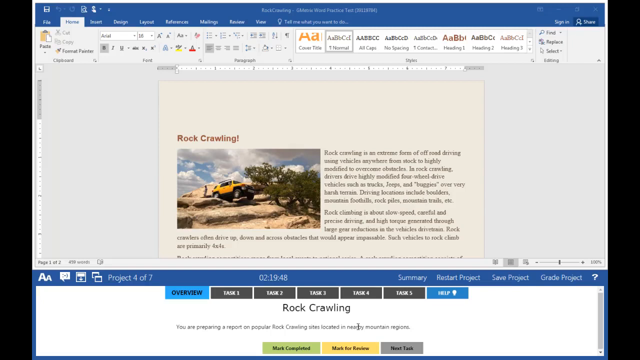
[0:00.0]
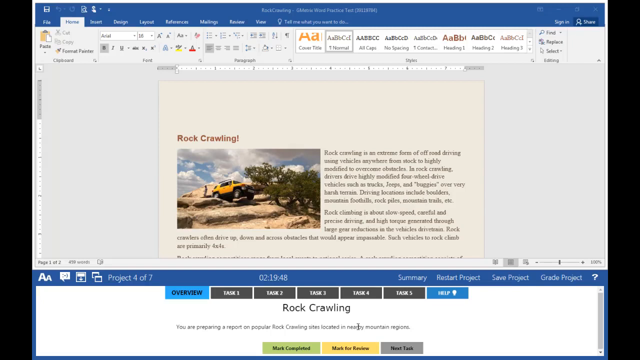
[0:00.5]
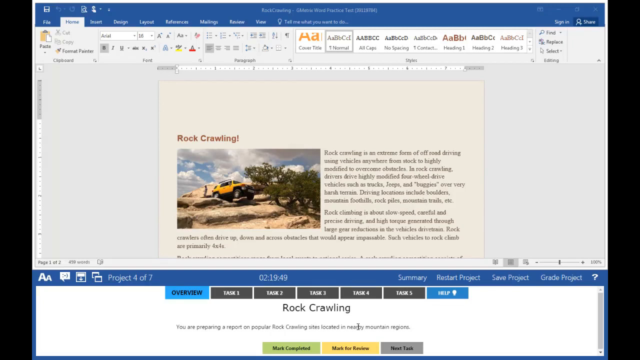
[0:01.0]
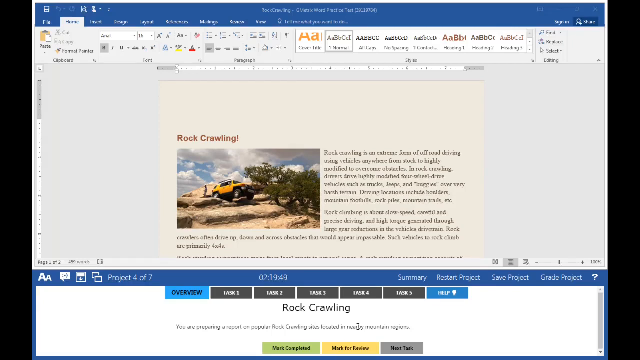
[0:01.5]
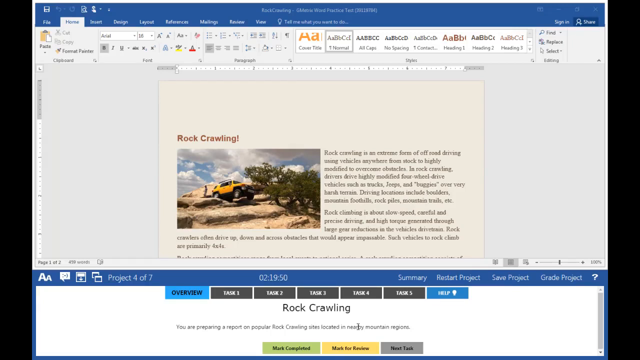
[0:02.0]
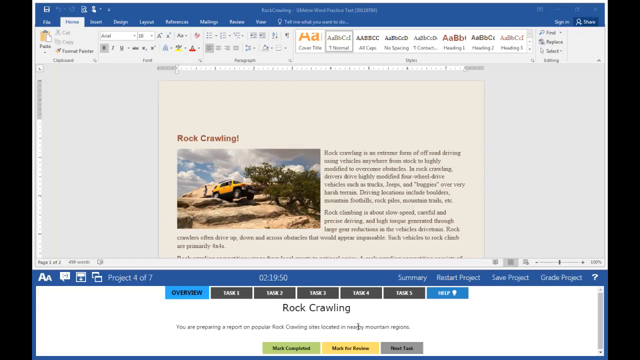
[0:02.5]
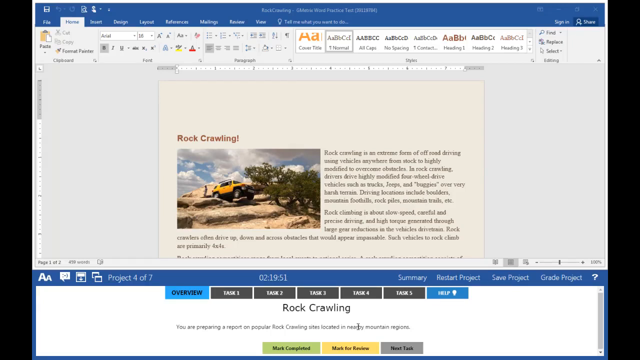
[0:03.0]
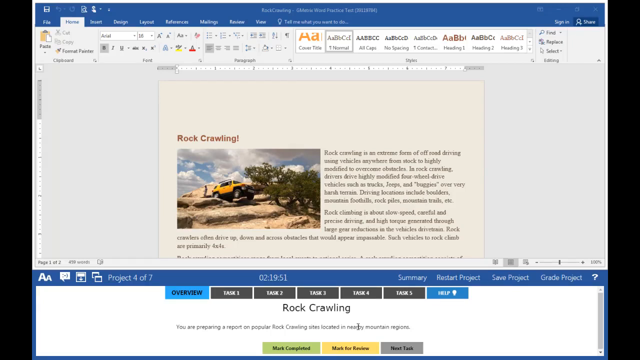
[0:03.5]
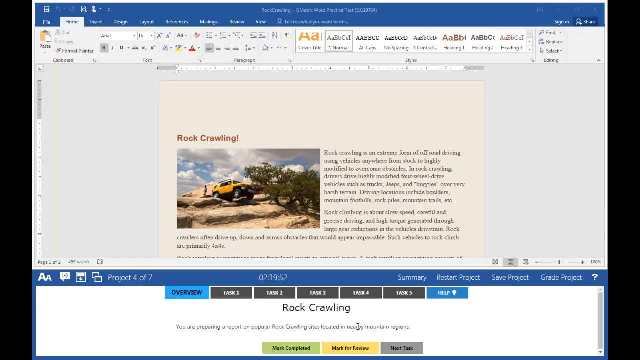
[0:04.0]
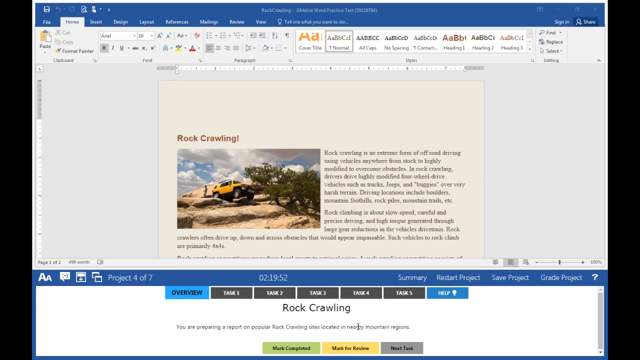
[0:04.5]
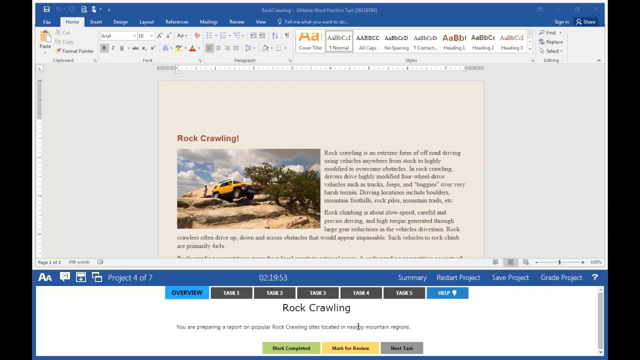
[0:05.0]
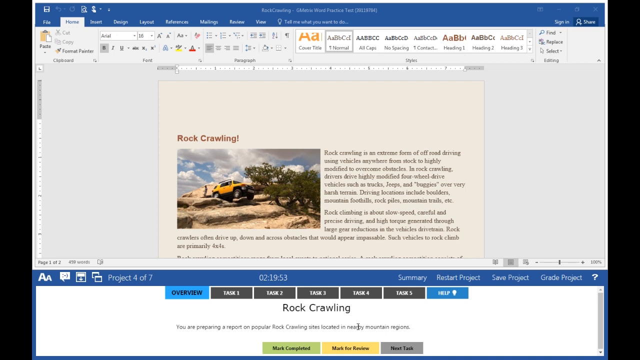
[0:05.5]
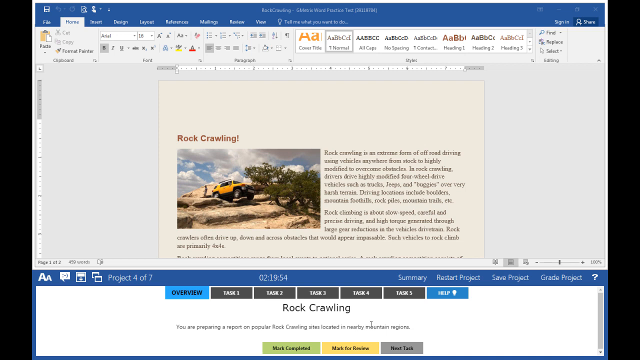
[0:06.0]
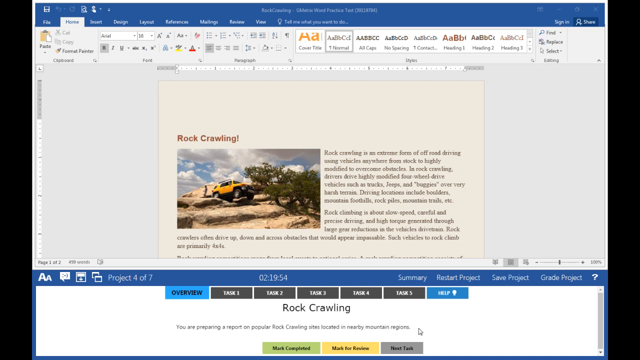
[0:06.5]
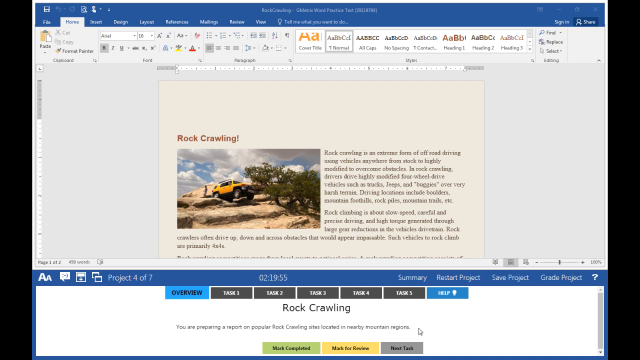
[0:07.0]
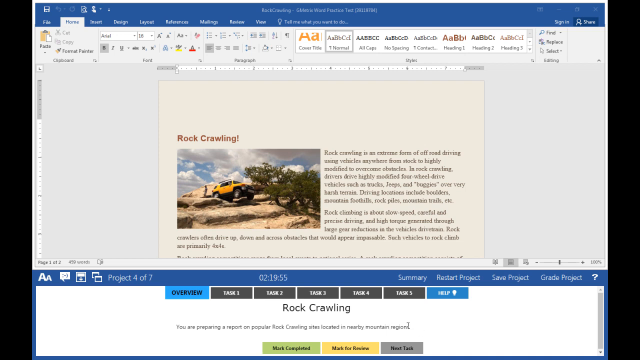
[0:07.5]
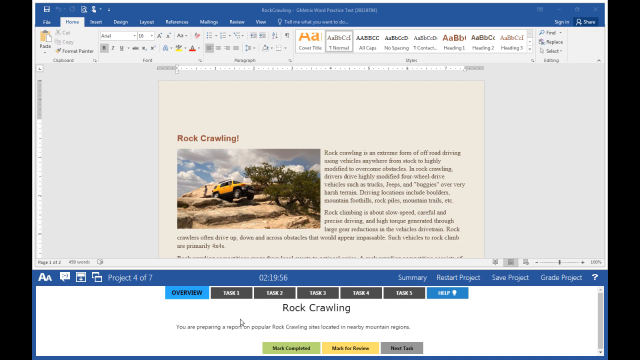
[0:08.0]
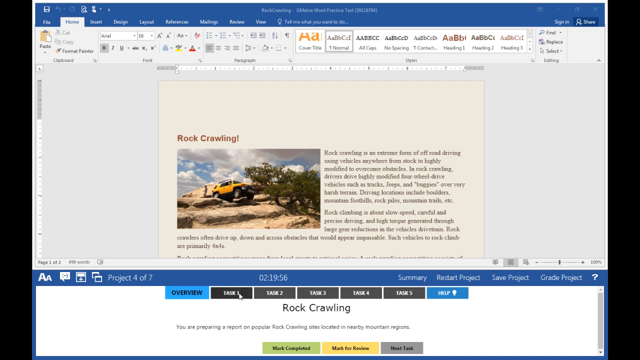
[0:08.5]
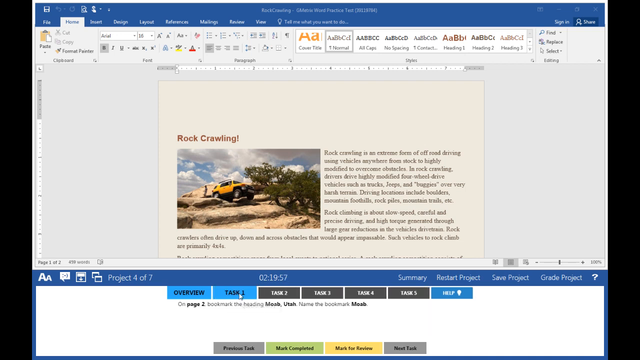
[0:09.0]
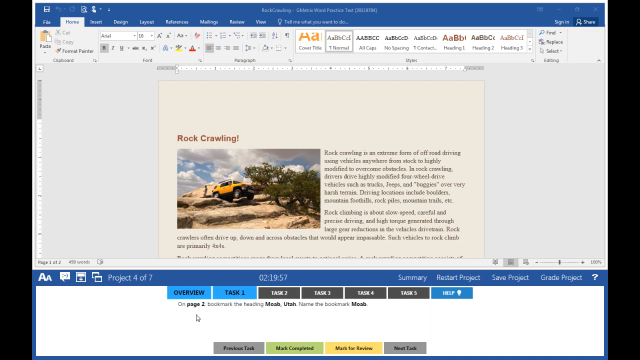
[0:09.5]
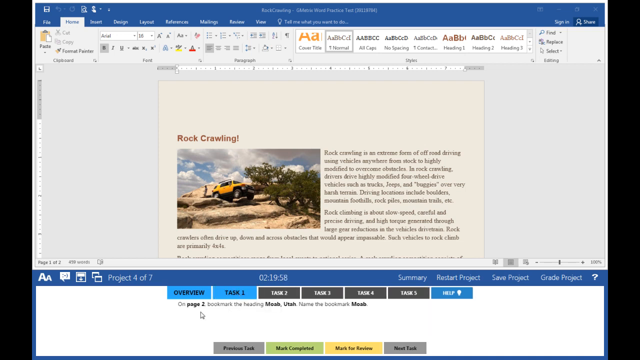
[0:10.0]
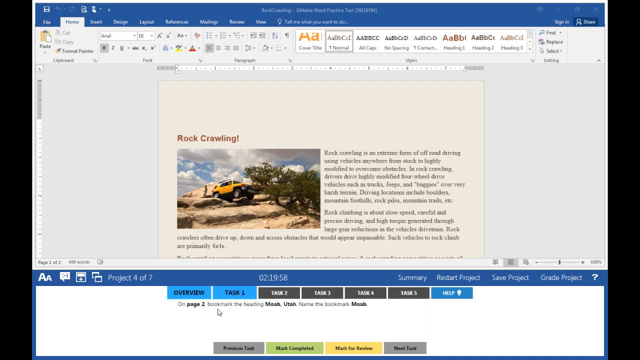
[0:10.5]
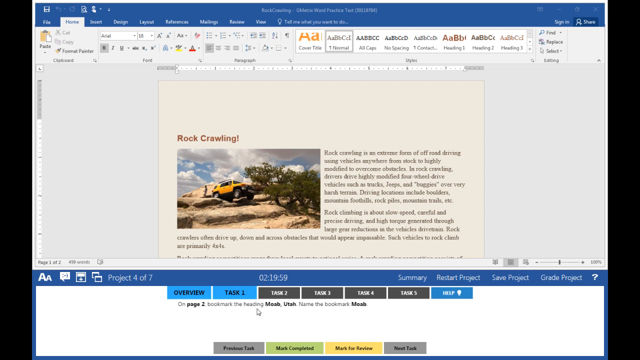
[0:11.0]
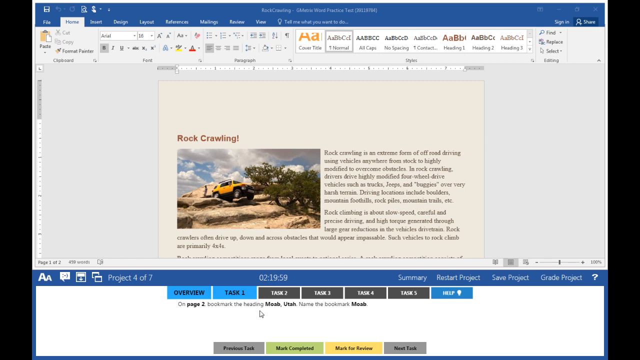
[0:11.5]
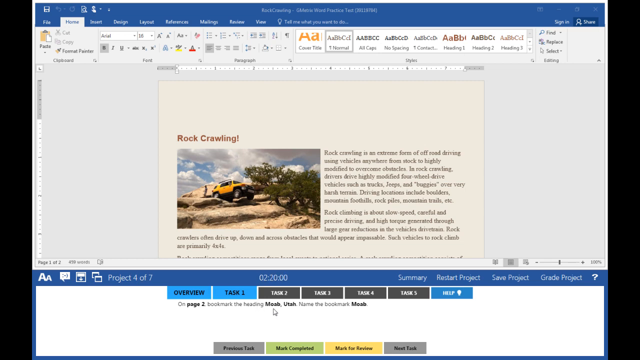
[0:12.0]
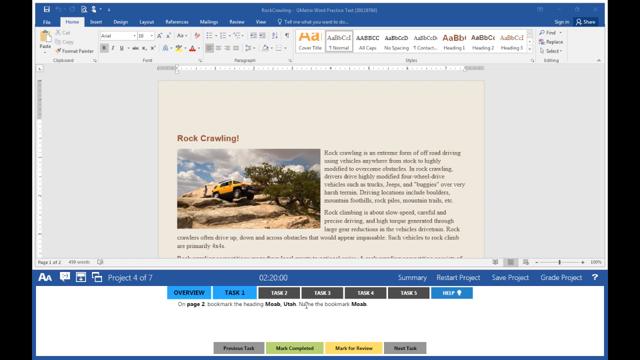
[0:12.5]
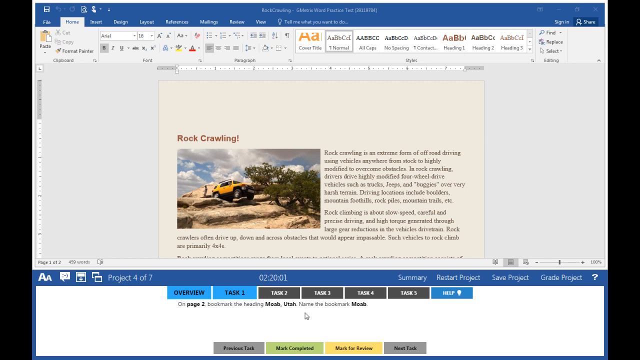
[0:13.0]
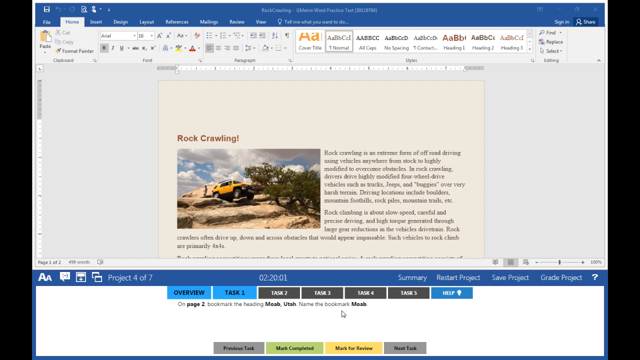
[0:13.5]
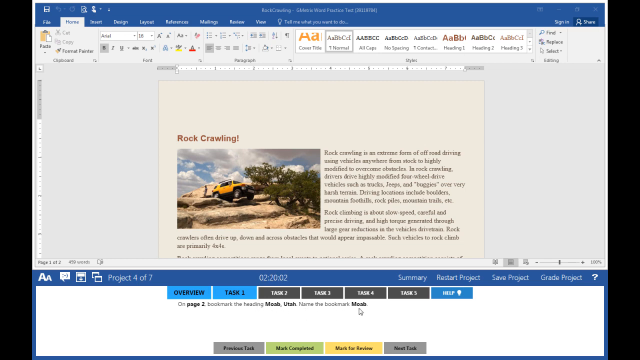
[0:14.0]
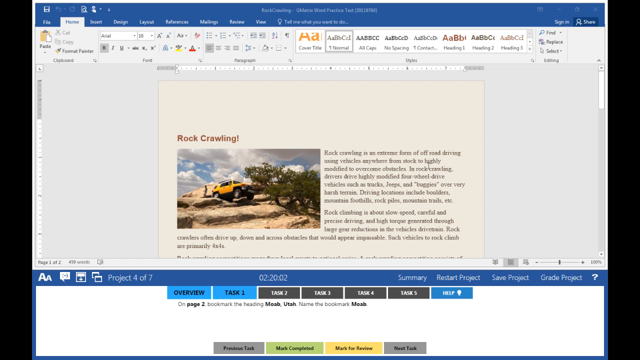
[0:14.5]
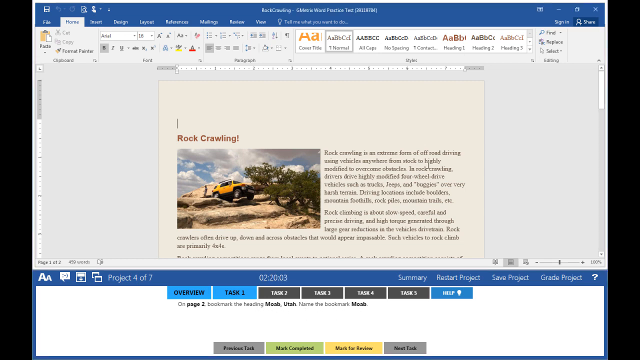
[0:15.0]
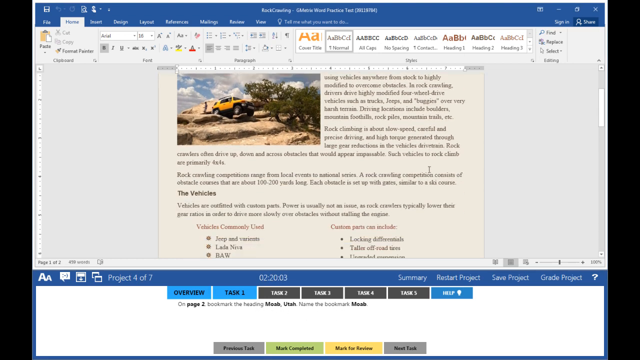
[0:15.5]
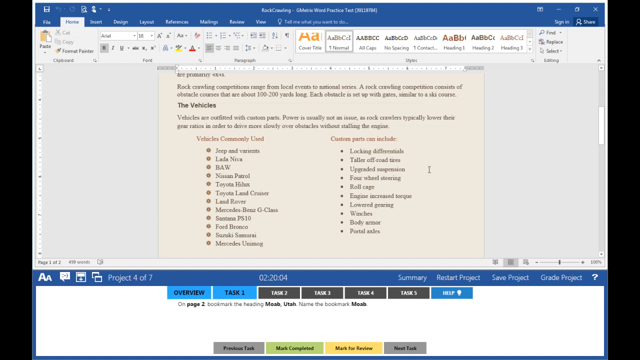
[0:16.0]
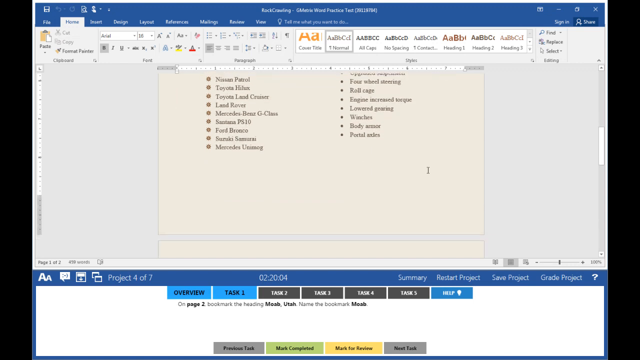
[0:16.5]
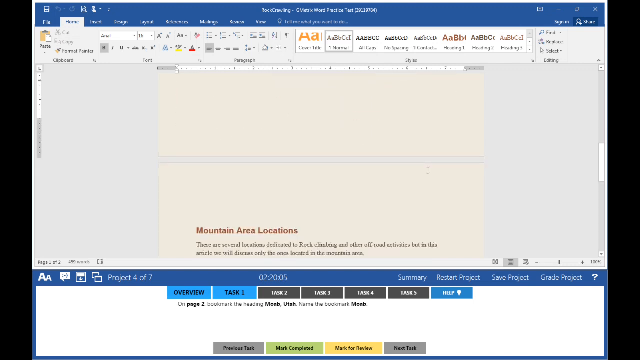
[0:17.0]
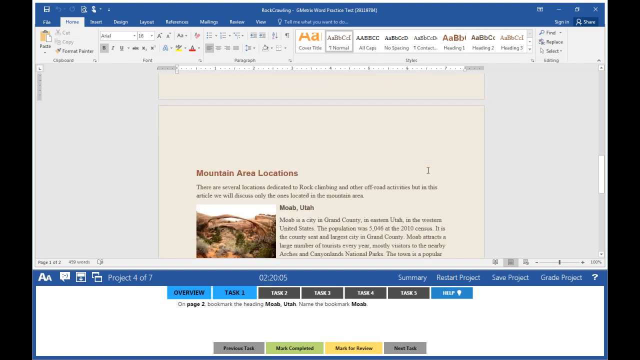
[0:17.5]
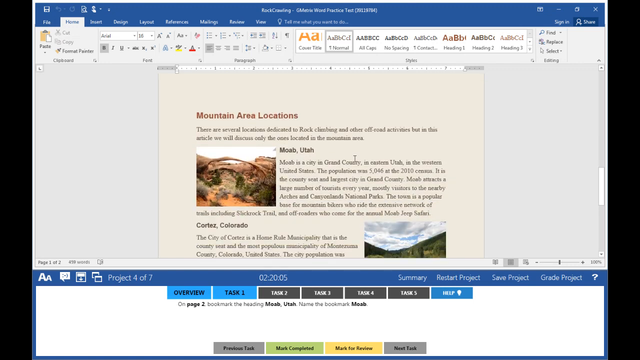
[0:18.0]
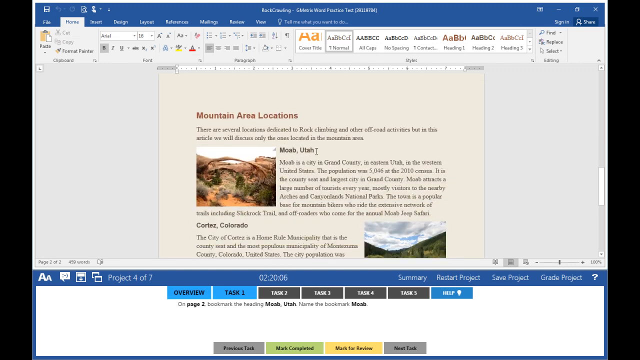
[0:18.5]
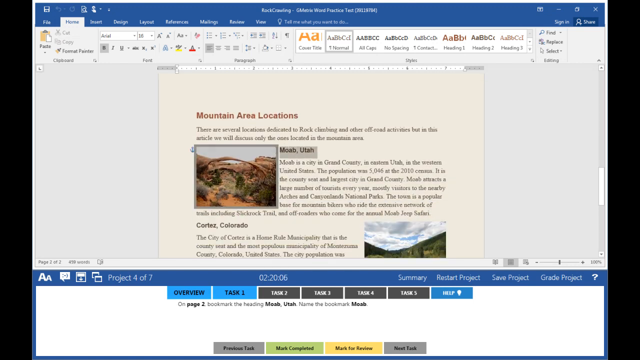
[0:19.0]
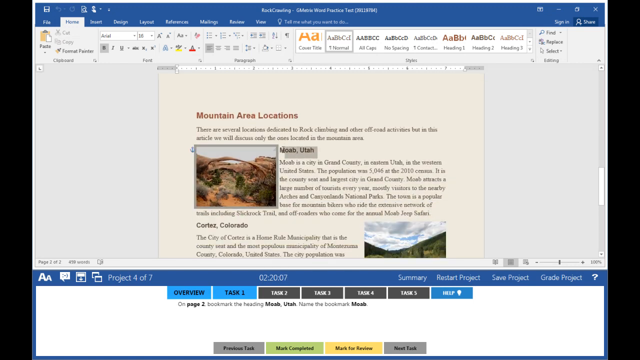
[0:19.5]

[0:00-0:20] A person's computer screen shows a Microsoft document describing different activities, and the person is reading it. The first document is about rock crawling and says it is "an extreme form of off-road driving using vehicles anywhere from stock to highly modified to overcome obstacles." The text continues: "in rock crawling drivers drive highly modified four-wheel vehicles such as trucks, jeeps, buggies" "over very harsh terrain. Driving locations include boulders, mountain foothills, rock piles, mountain trails, etc." It also reads "rock climbing is about slow speed, careful and precise driving and high torque generated through large gear reductions in the vehicle's drivetrain," "rock crawlers often drive up, down and across obstacles that would appear impassable," and "such vehicles to rock climb are primarily 4x4." The person scrolls down, stops at Moab, Utah, and highlights it.